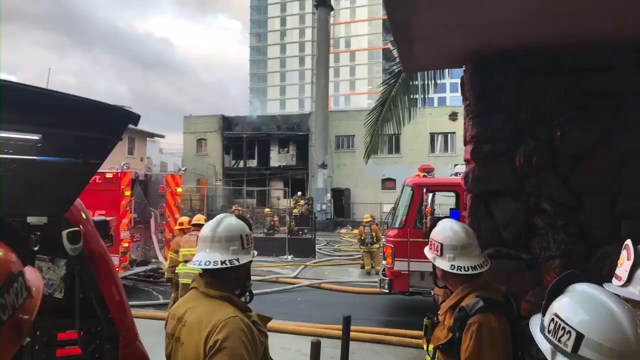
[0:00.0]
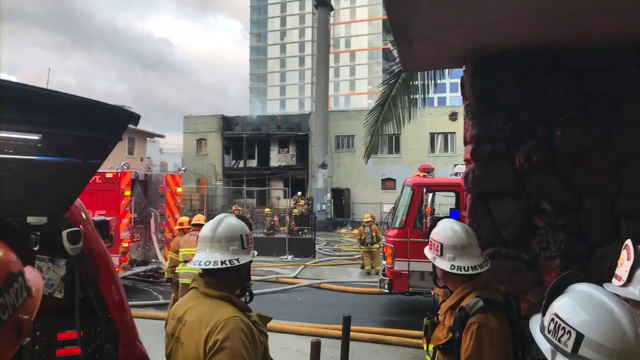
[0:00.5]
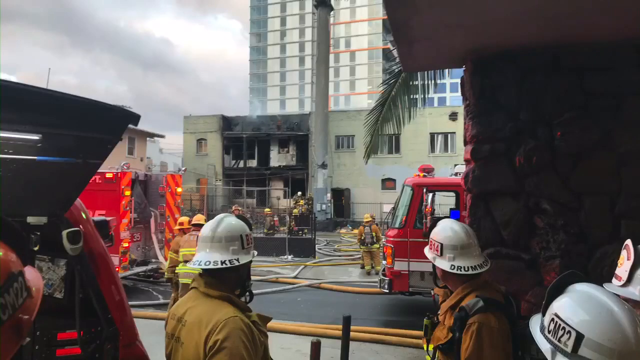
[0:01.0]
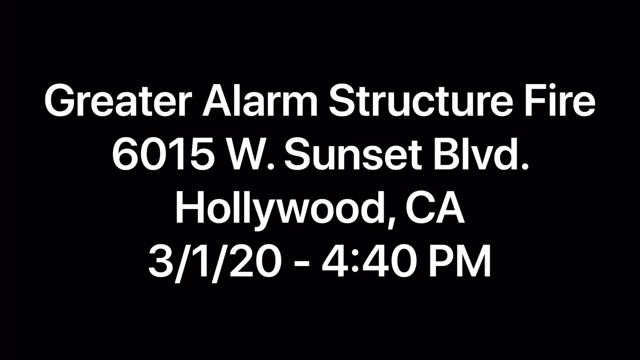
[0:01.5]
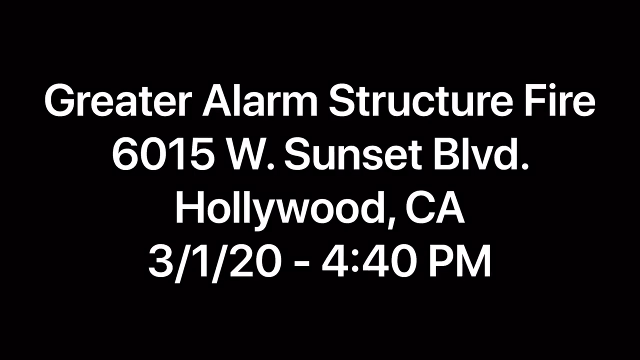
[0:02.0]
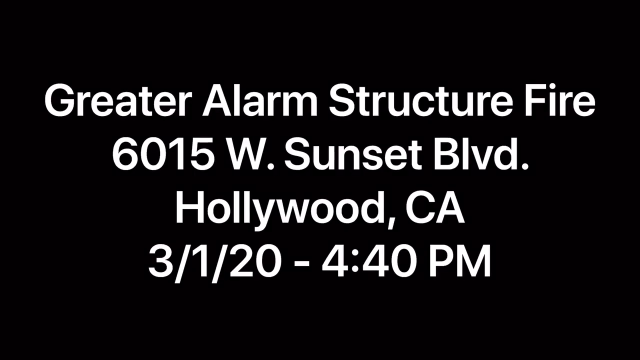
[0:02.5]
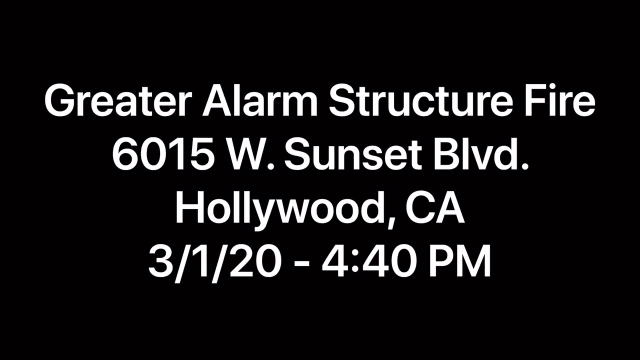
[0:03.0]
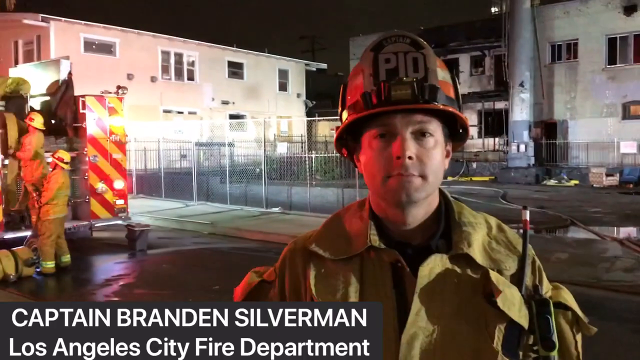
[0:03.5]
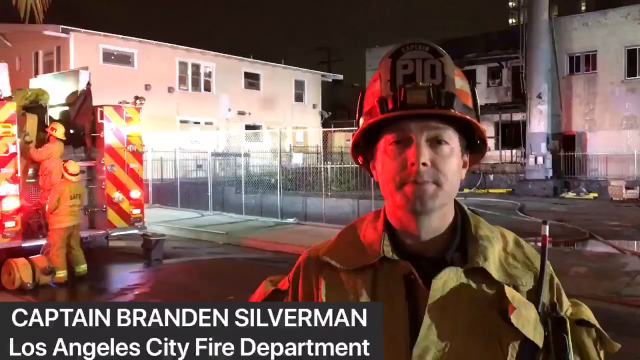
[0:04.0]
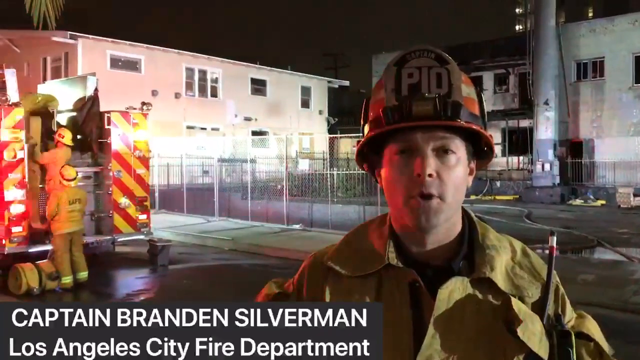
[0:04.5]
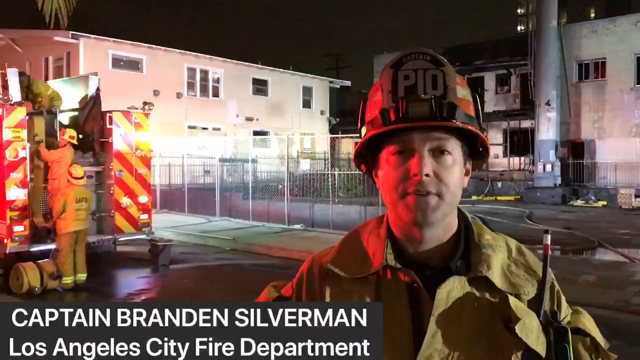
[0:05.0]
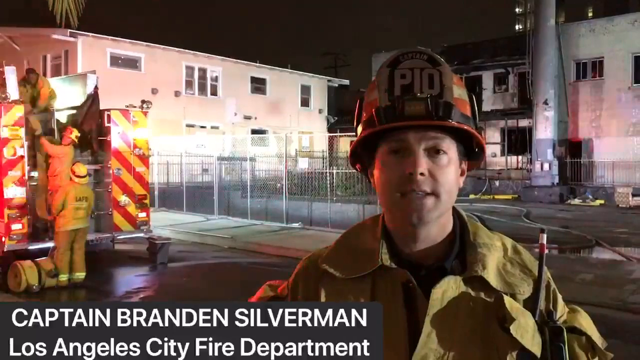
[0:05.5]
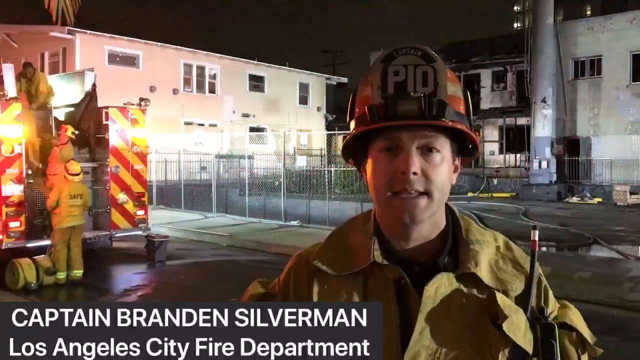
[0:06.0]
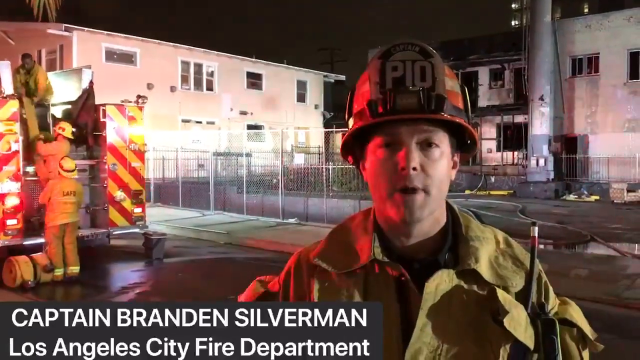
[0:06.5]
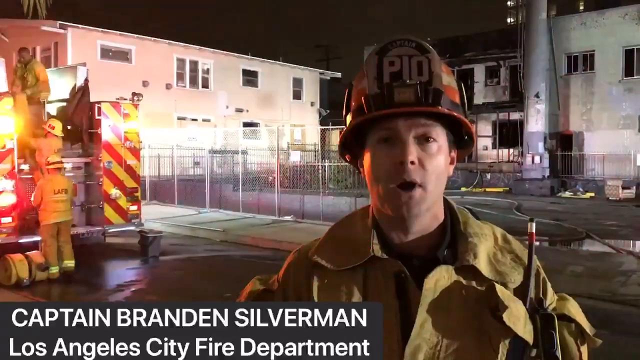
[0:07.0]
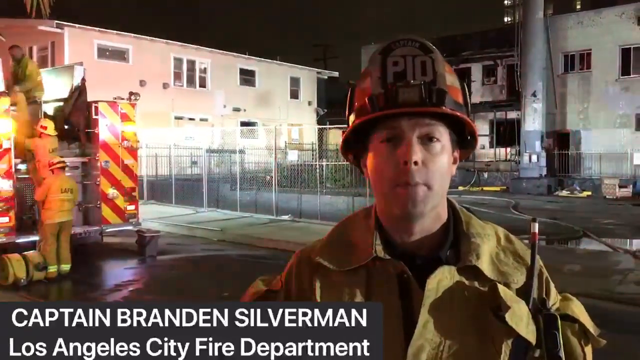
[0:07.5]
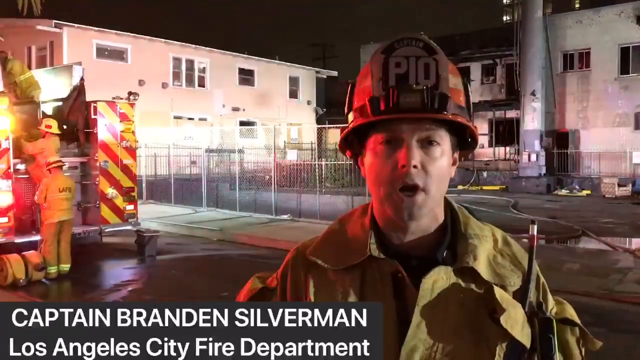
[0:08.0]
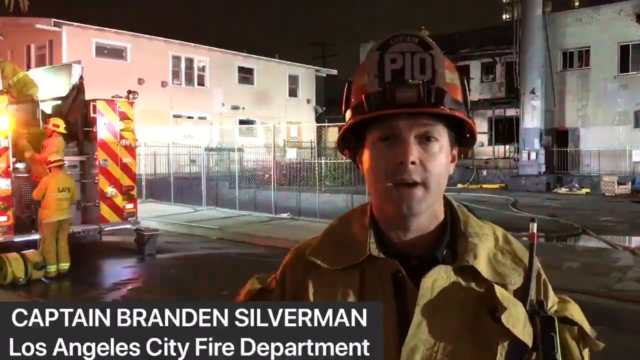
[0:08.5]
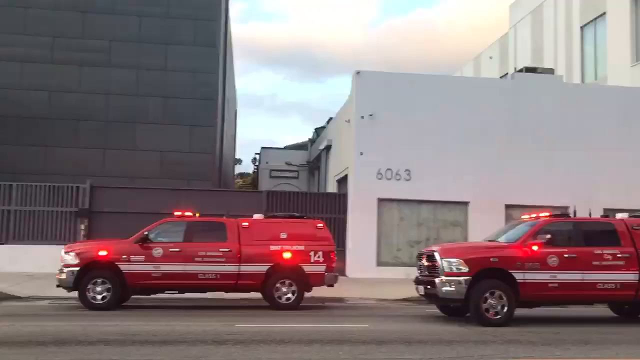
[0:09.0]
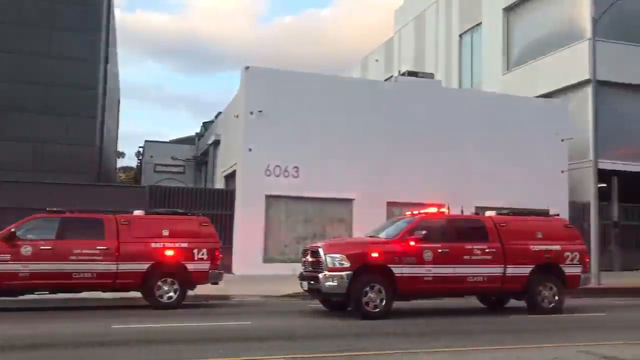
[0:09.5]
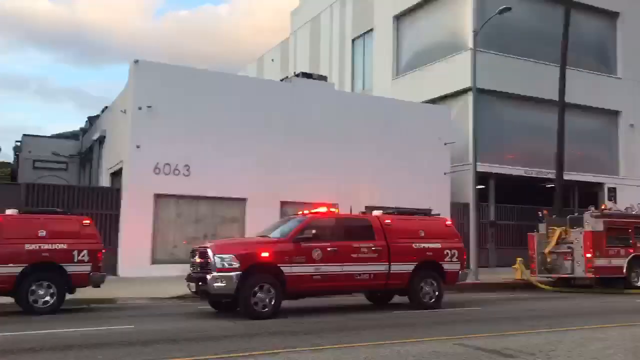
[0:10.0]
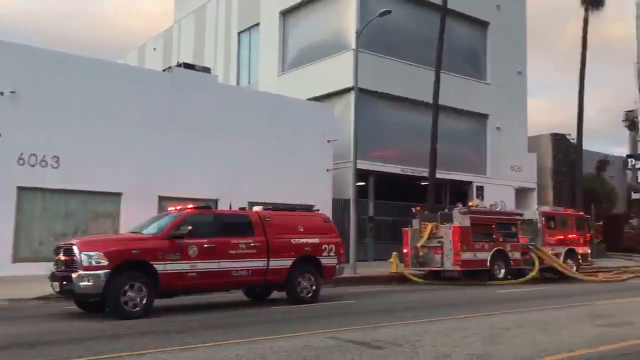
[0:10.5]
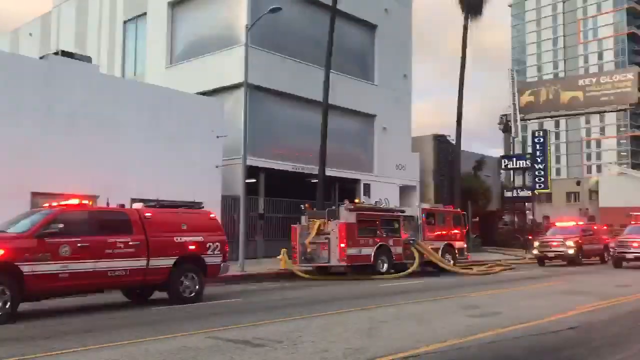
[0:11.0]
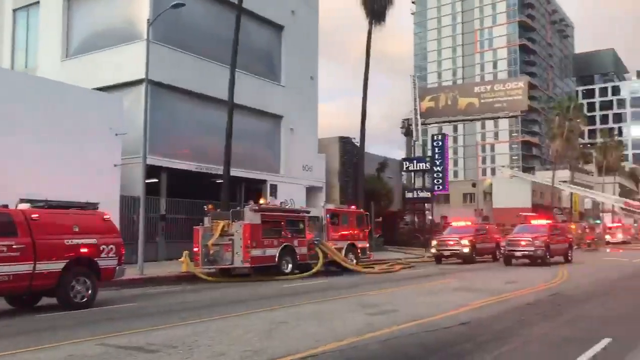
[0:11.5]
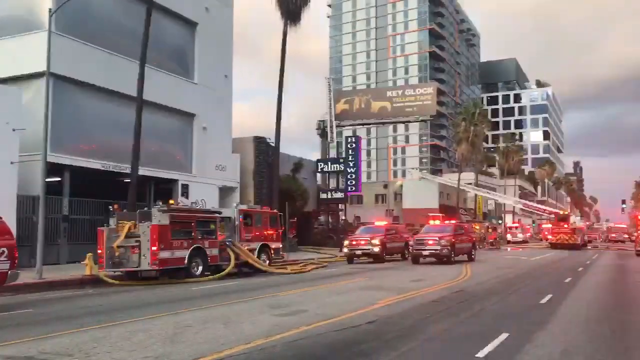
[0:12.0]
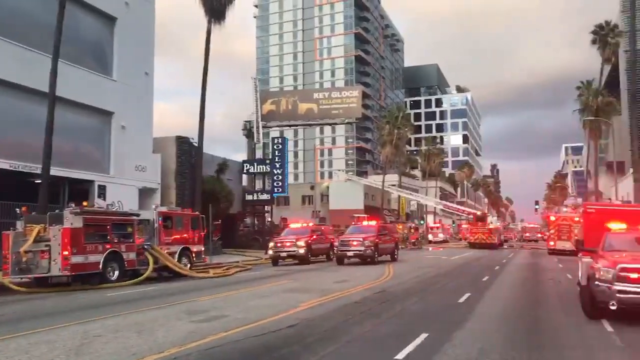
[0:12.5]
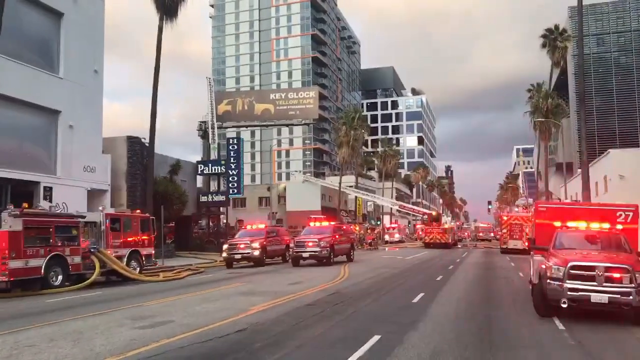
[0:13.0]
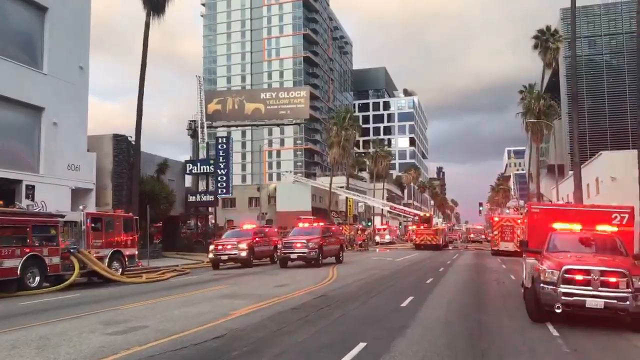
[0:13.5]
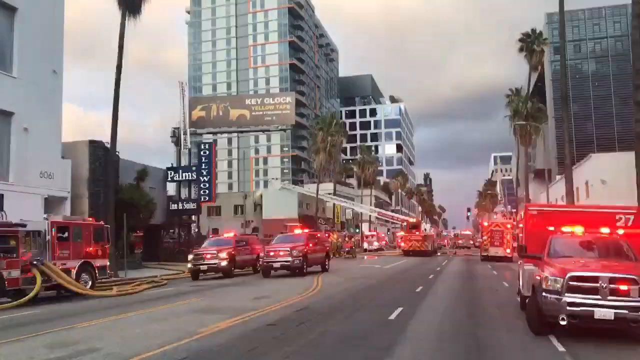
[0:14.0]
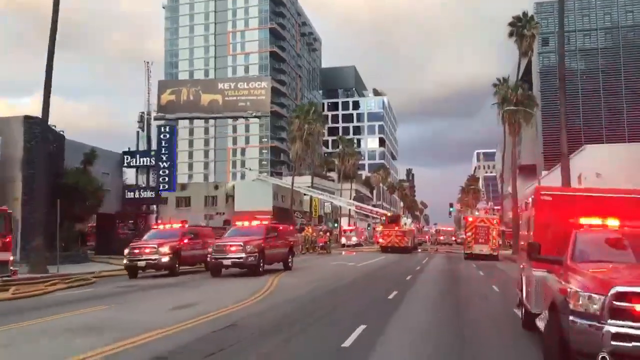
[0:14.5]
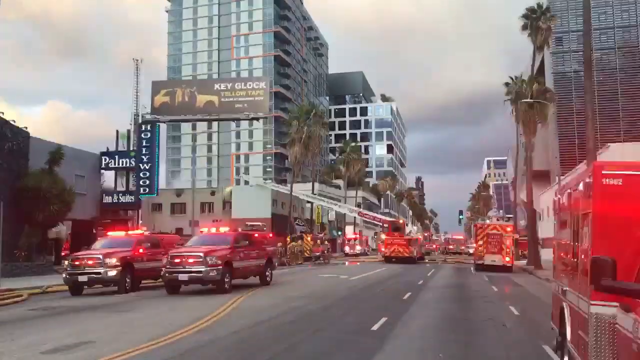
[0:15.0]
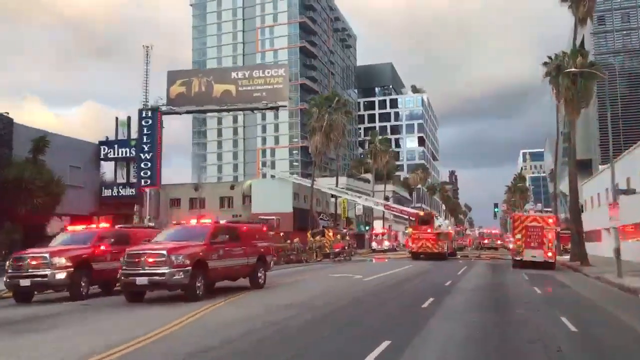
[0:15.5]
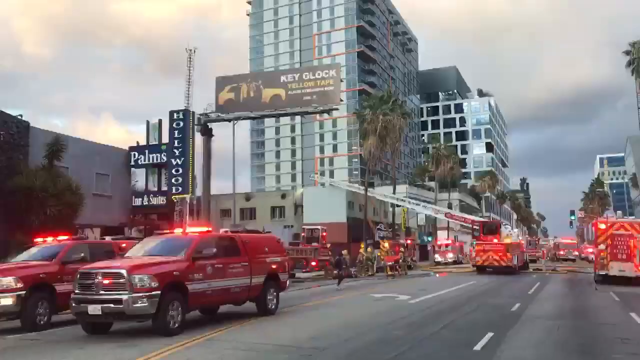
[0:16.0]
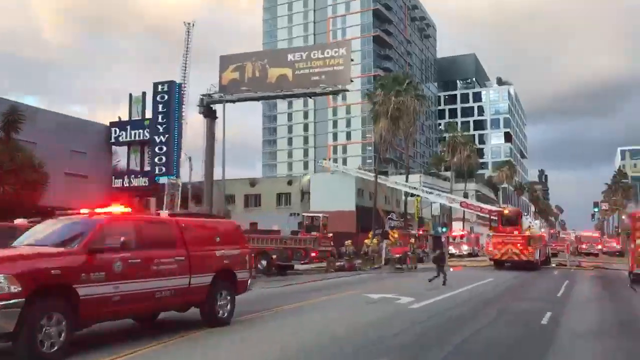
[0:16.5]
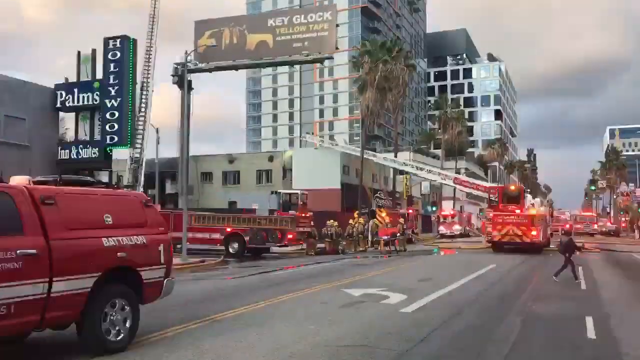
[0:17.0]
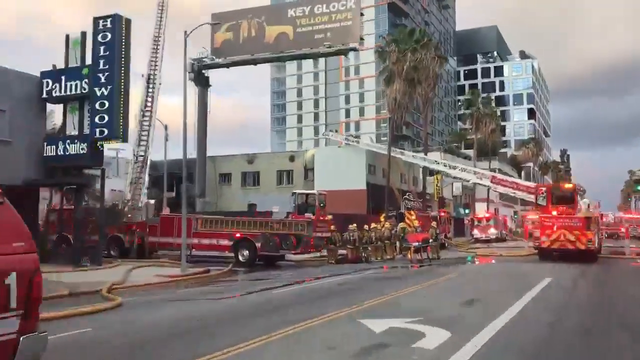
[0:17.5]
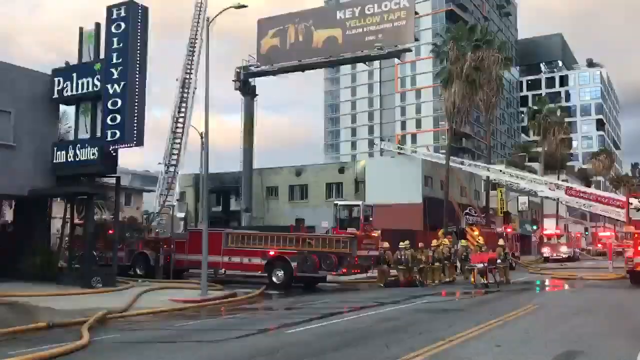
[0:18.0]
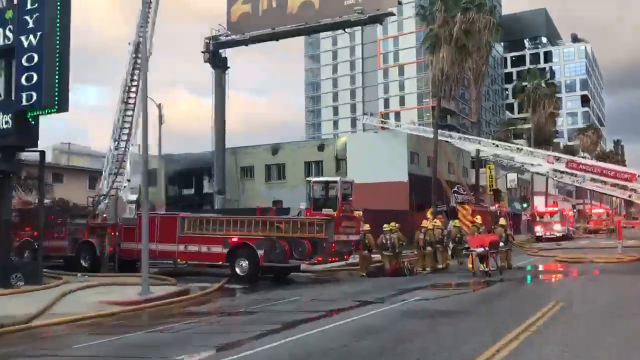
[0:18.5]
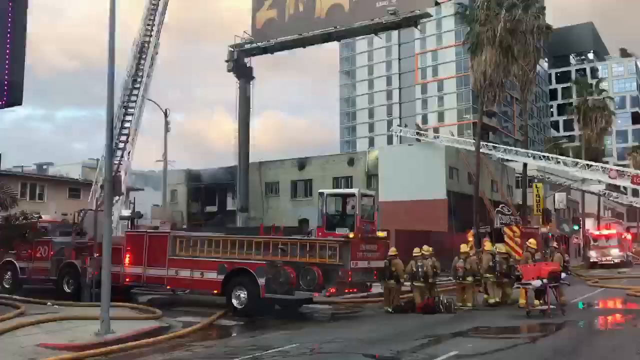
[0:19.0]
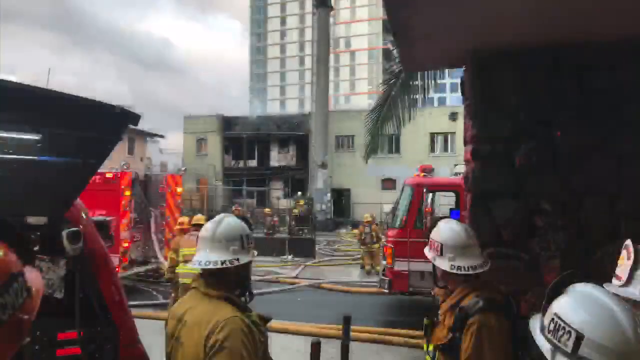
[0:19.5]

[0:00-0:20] A group of firefighters is on site at what appears to be a burning building. More than 10 fire trucks are there, and there are a lot of buildings near the burning site. A title reads "Great Alarm Structure Fire, 6015W, Sunset Blvd, Hollywood, in CA," with the date 3-1-20 and the time 4-10 p.m. The firefighters have gathered together in what seems to be a meeting, apparently planning how to keep the fire from spreading to the nearby area.